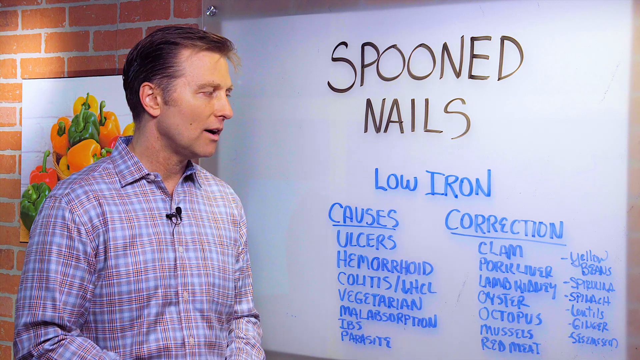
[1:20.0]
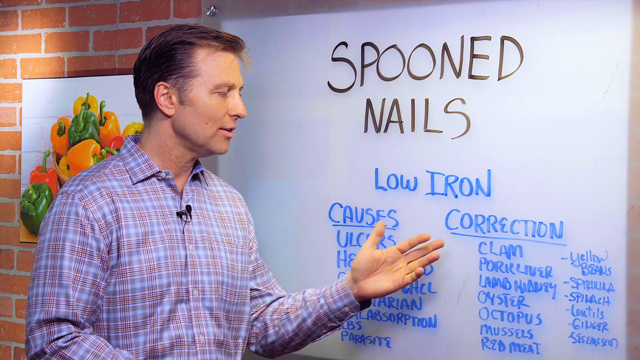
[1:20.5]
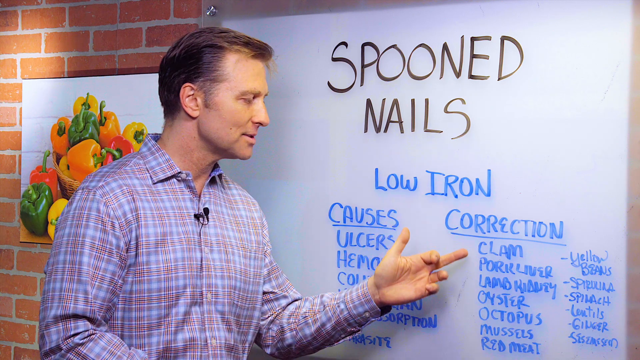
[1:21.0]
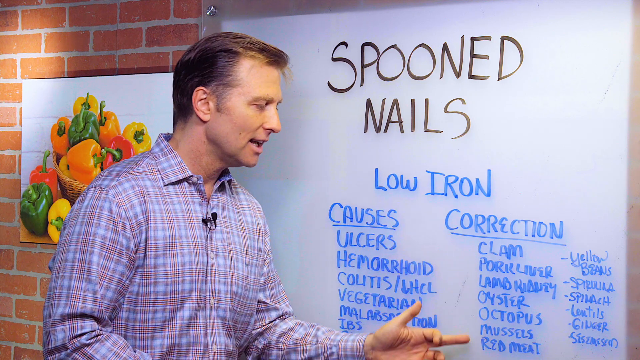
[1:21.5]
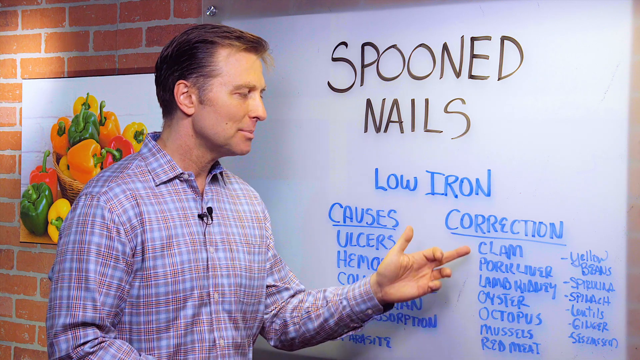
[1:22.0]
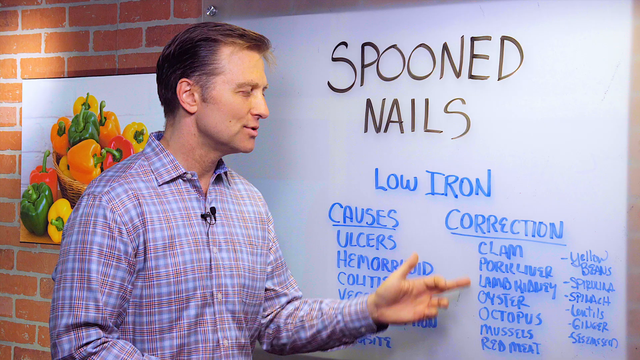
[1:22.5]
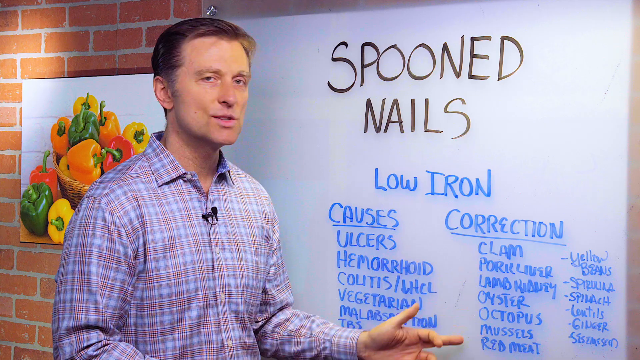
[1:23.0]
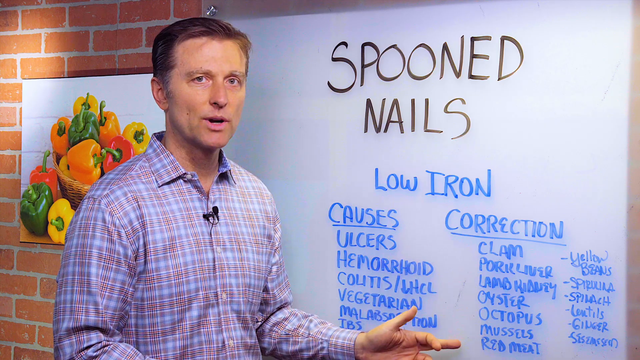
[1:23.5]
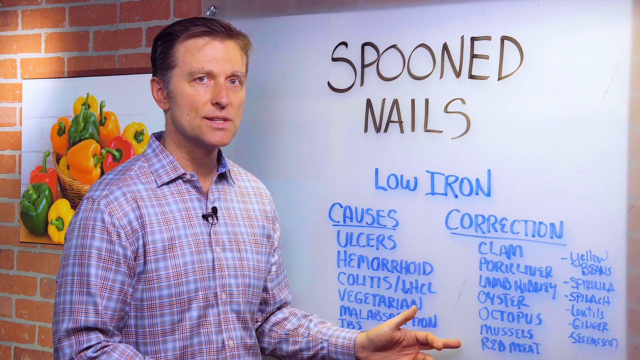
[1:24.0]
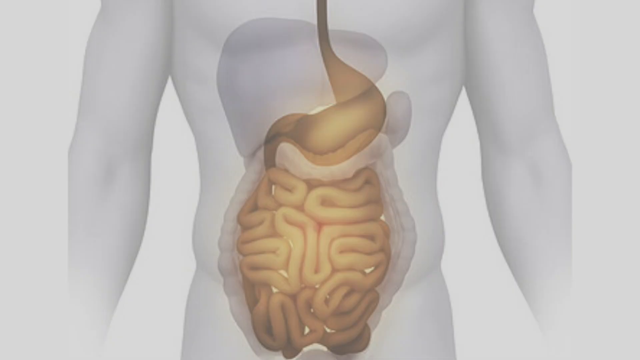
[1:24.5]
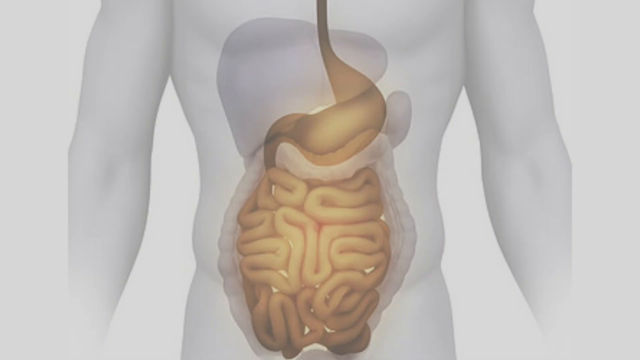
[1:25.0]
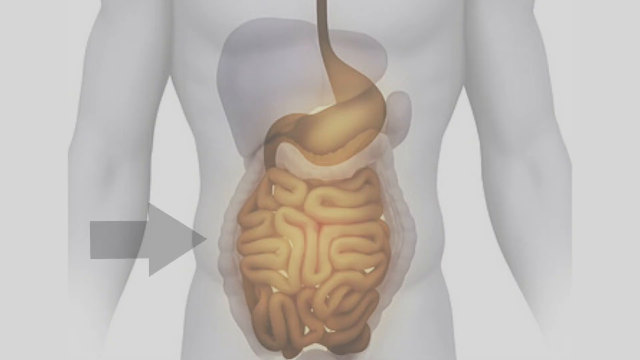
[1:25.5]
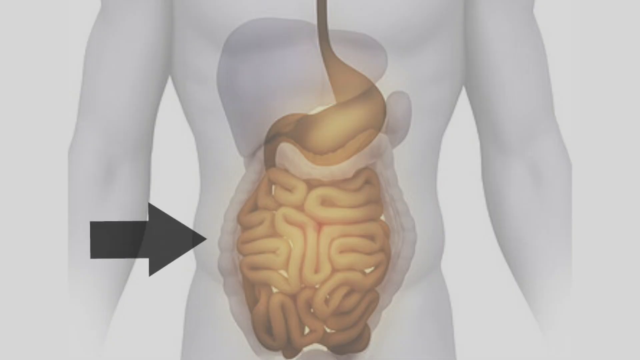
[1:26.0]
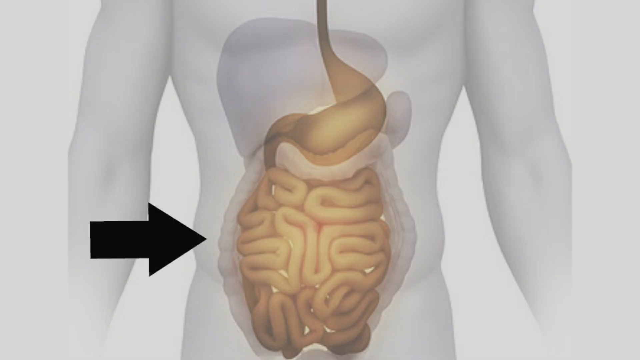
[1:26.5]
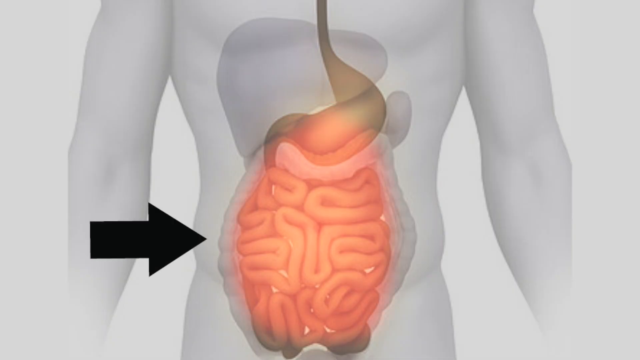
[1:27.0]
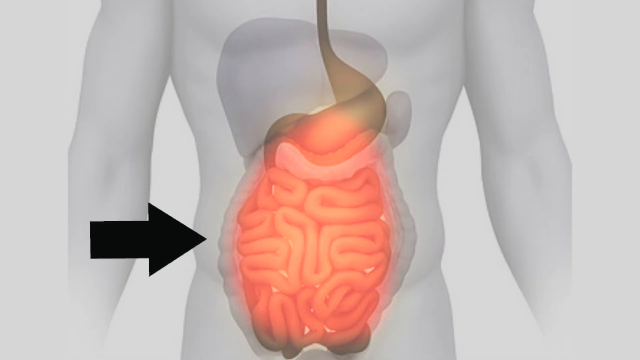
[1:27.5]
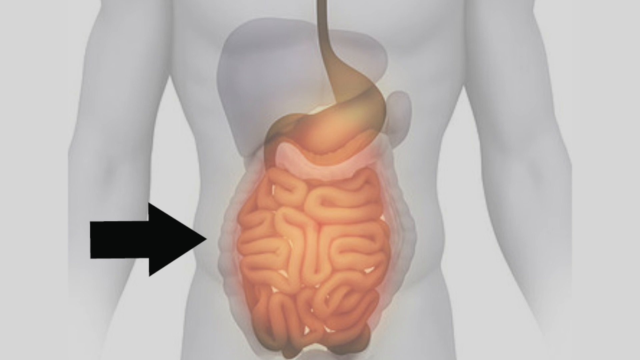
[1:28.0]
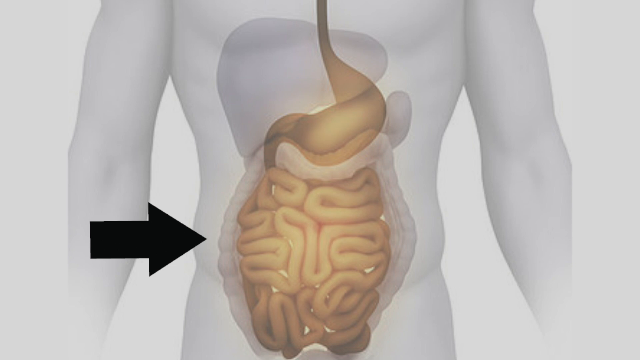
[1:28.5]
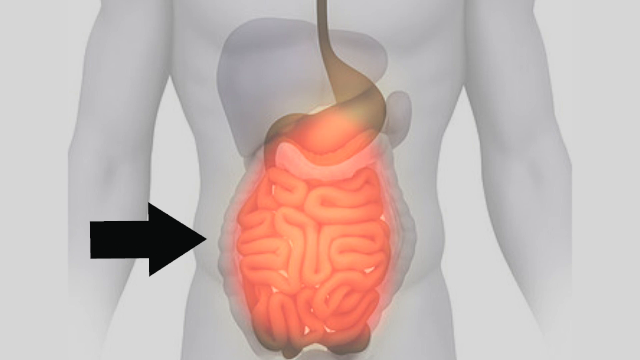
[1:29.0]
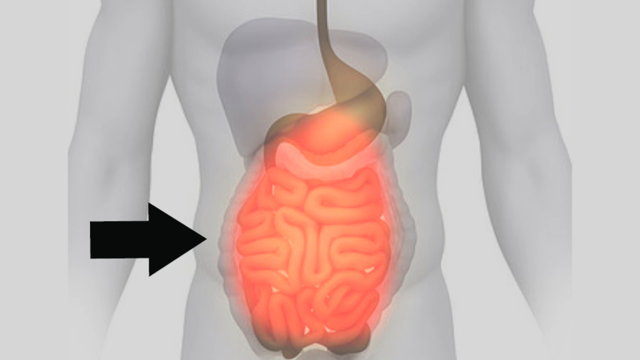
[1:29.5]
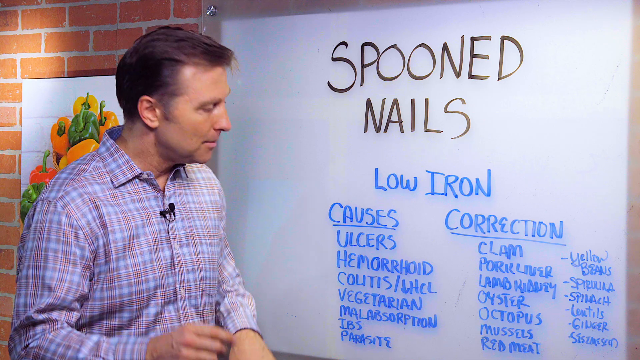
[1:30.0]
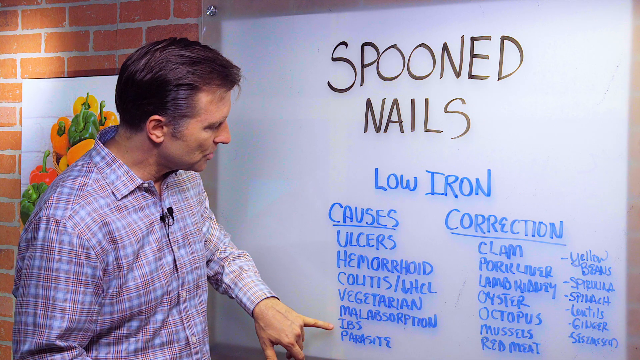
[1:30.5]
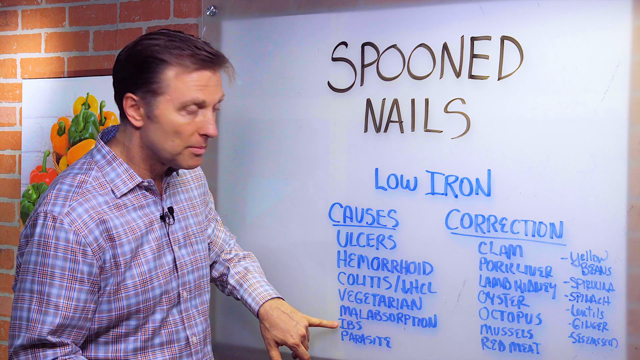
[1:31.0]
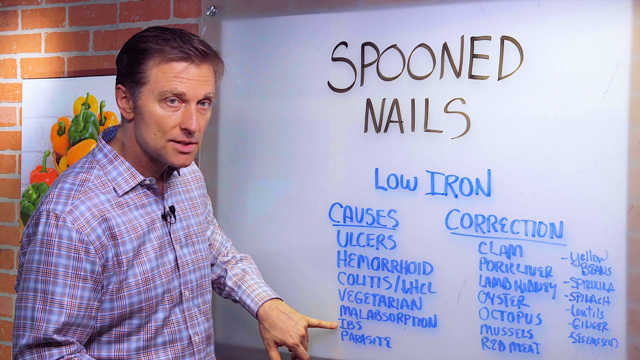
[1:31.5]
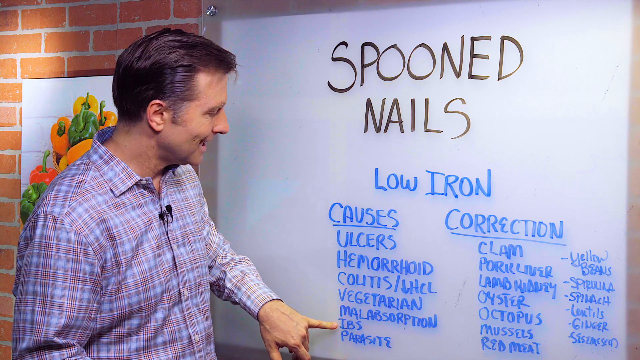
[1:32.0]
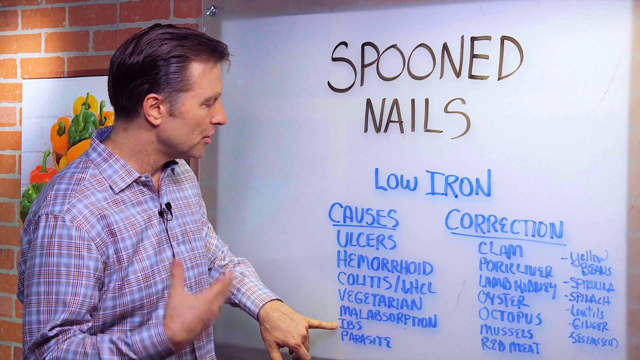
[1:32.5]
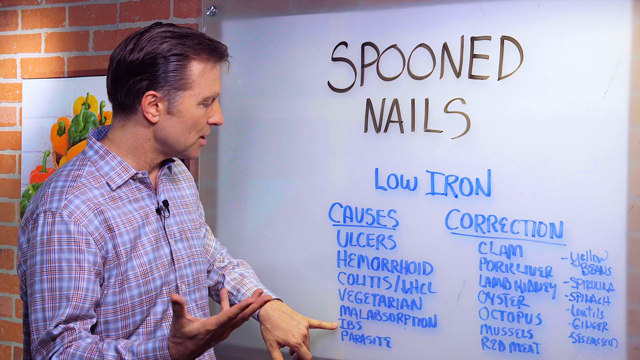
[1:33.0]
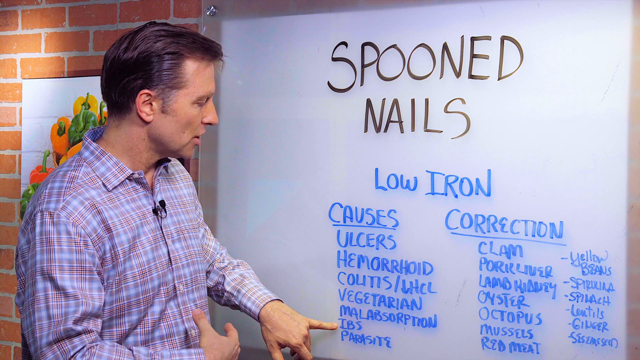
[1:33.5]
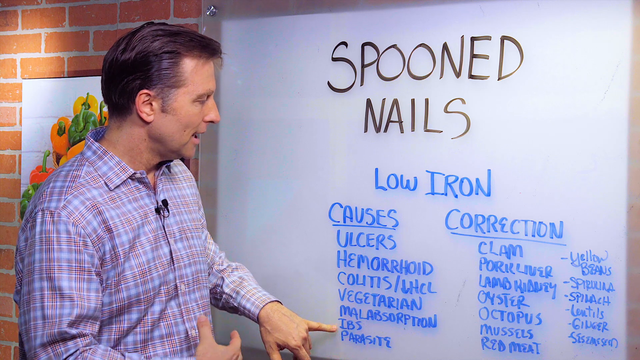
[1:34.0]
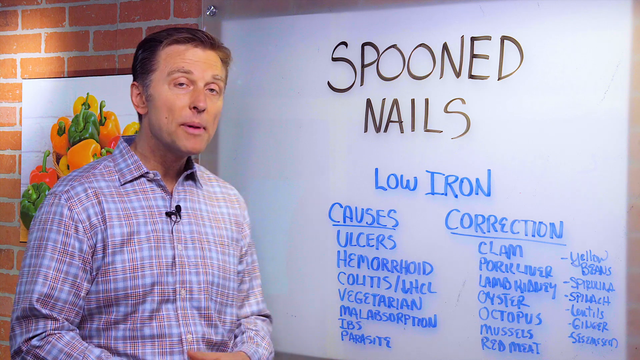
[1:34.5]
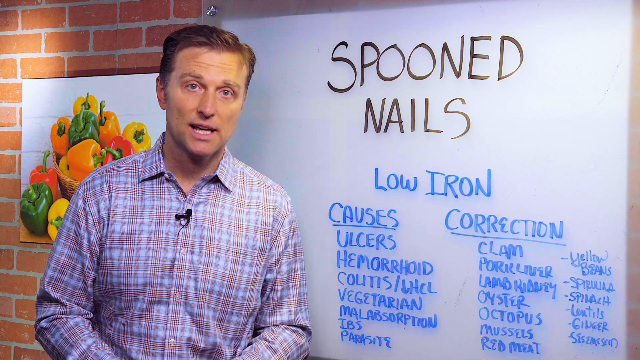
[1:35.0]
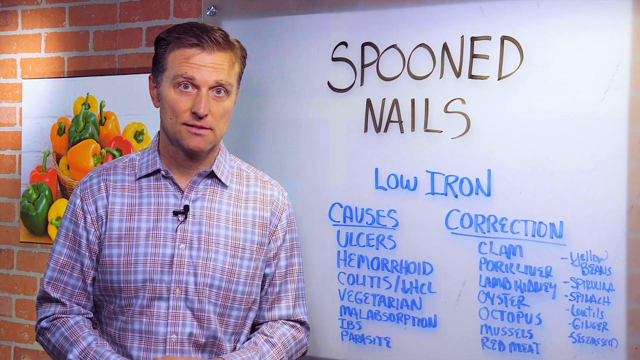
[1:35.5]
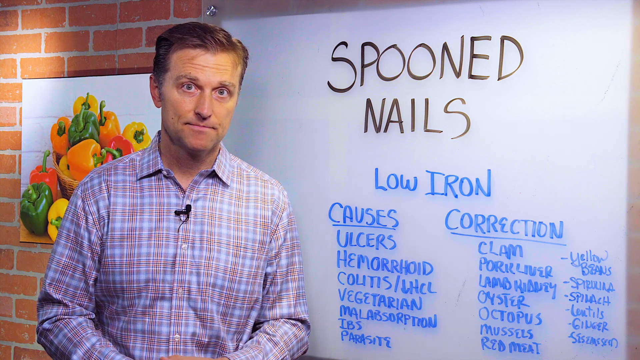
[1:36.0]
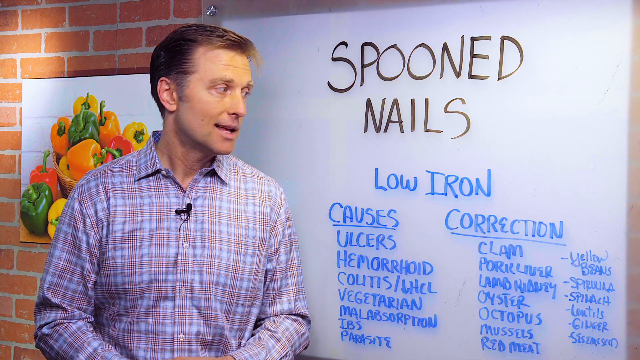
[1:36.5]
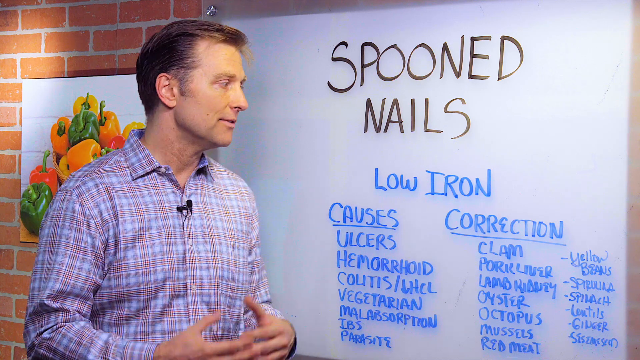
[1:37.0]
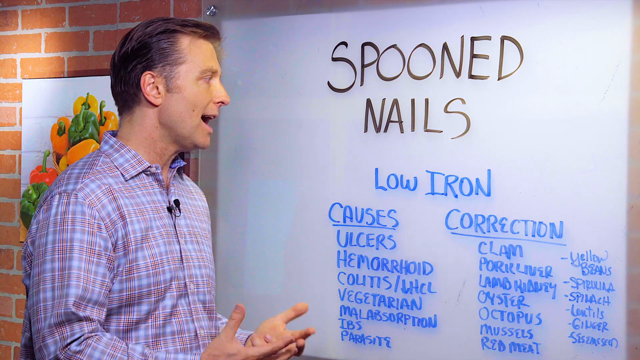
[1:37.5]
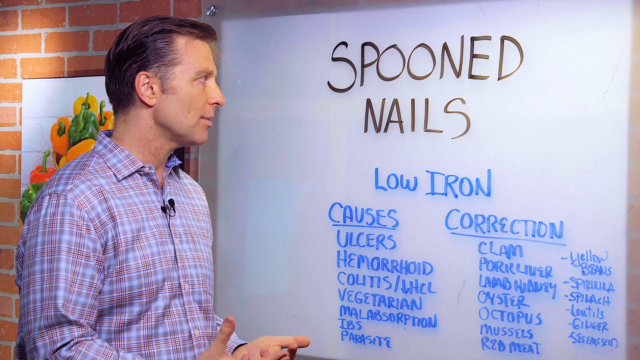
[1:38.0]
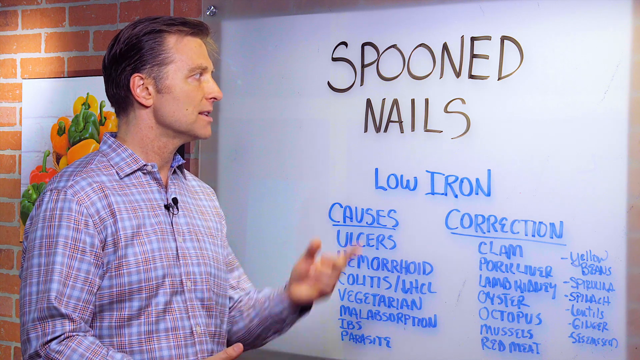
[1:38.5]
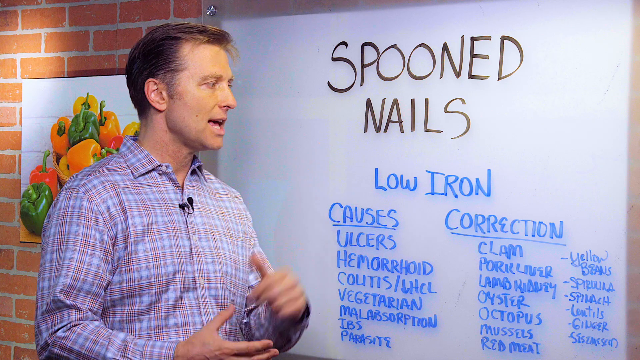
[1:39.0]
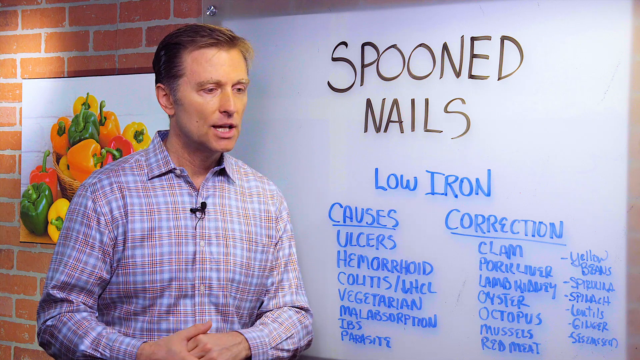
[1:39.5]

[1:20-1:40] A man, probably in his 40s, with short cropped brown hair, wears a button-up shirt with a microphone clipped to it. He stands in a room with an exposed brick wall and a painting; in front of him, off to his left, is a white dry erase board with words written in black and blue ink. He talks while pointing at the board with his left hand and fingers, for example using his middle finger to point at words. He traces his middle finger up and down very rapidly next to a list of words, such as "clam" and "oyster"; there are probably at least six or seven words stacked in a column, and he moves his finger up and down as though talking specifically about those words. Then a different video comes into the picture: a computer animation of a transparent male human body showing the digestive system, including intestines and a stomach.